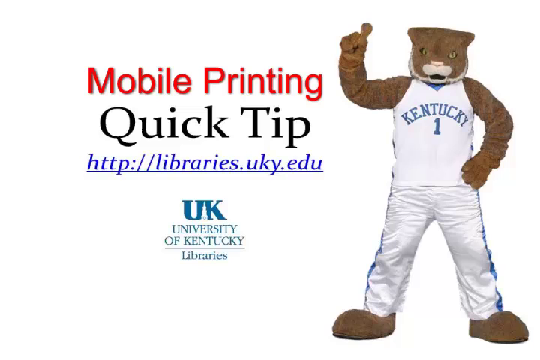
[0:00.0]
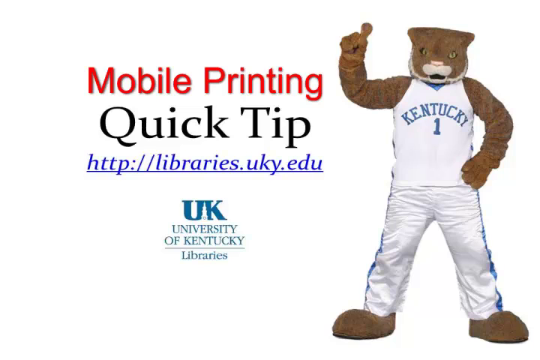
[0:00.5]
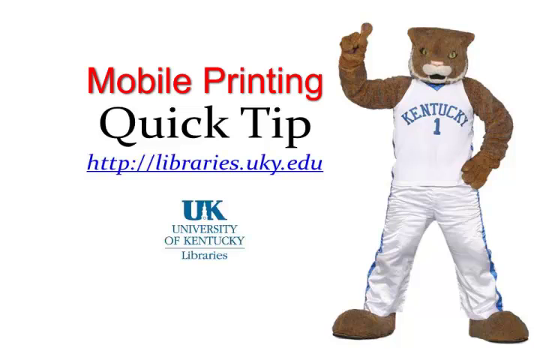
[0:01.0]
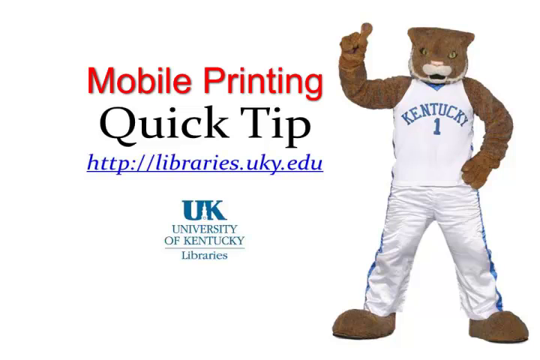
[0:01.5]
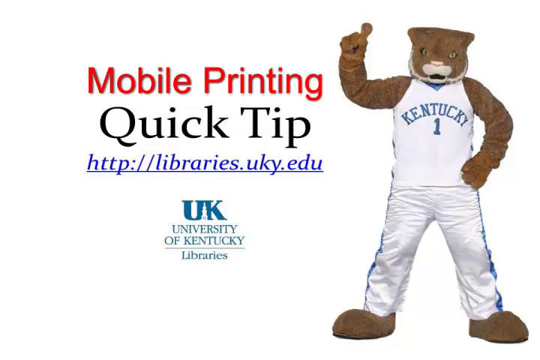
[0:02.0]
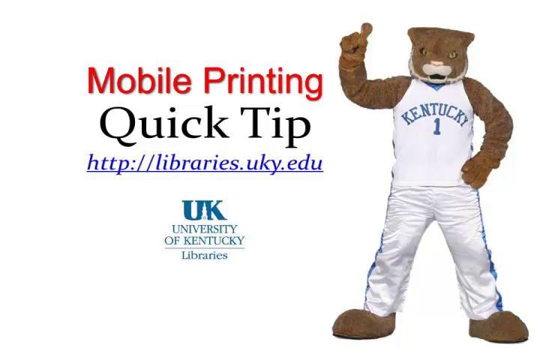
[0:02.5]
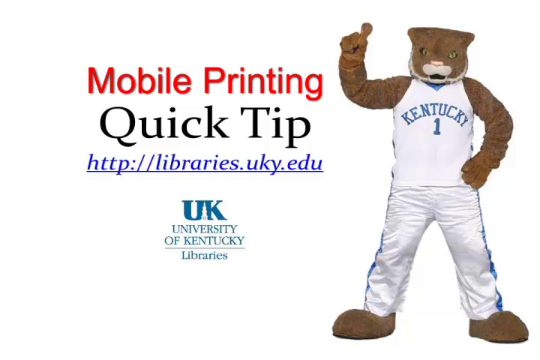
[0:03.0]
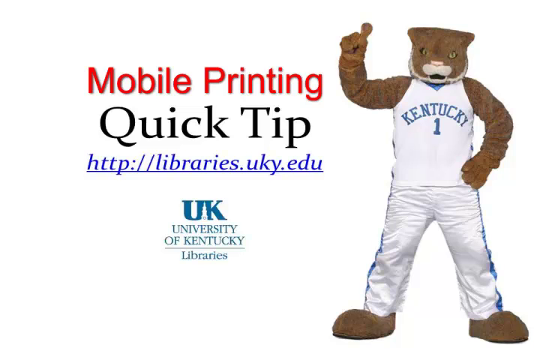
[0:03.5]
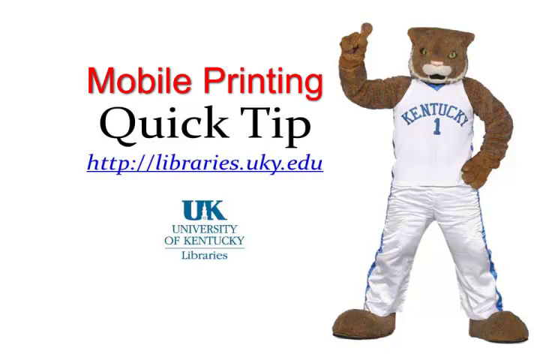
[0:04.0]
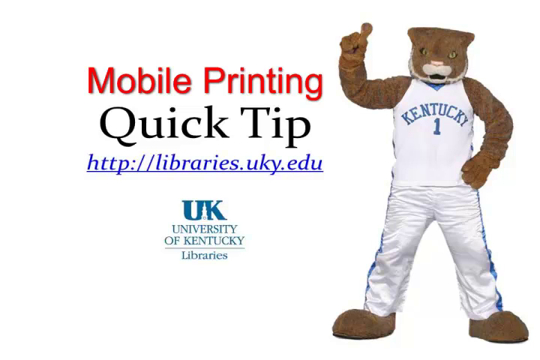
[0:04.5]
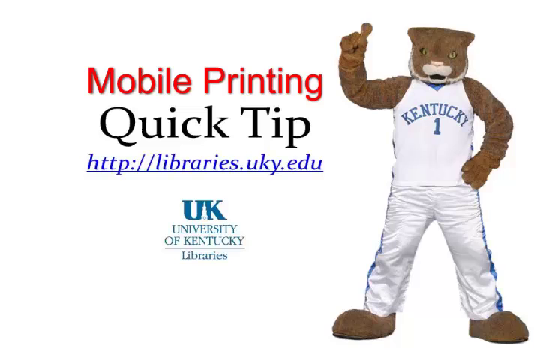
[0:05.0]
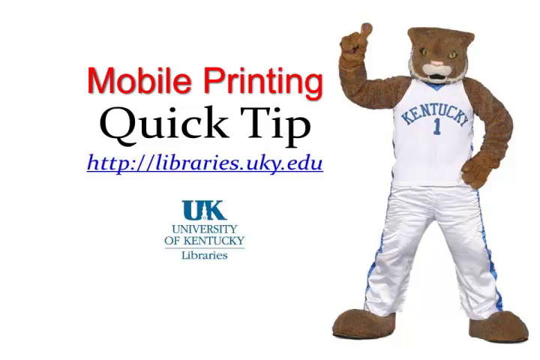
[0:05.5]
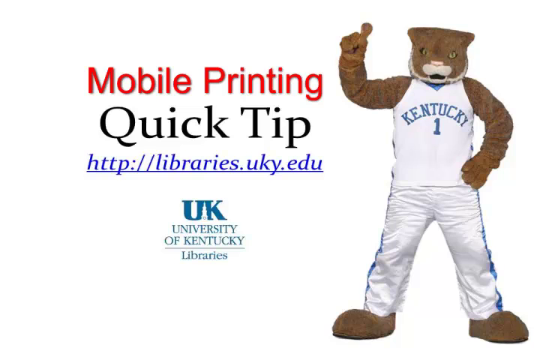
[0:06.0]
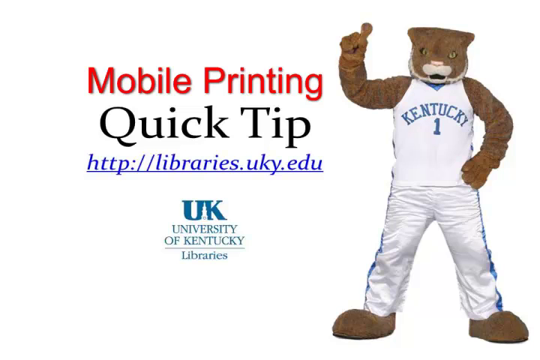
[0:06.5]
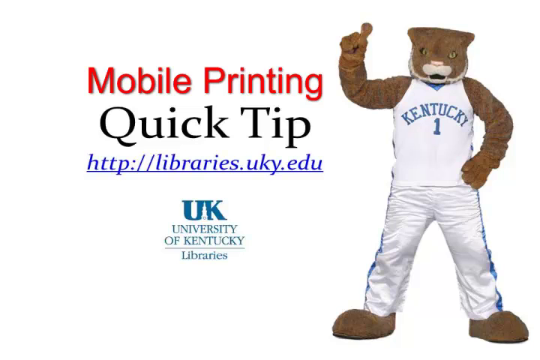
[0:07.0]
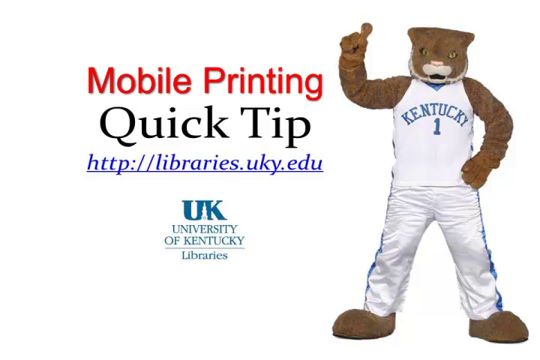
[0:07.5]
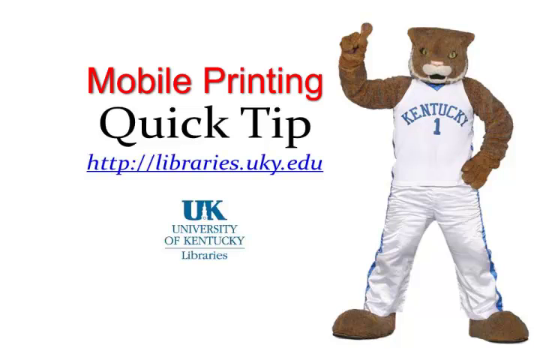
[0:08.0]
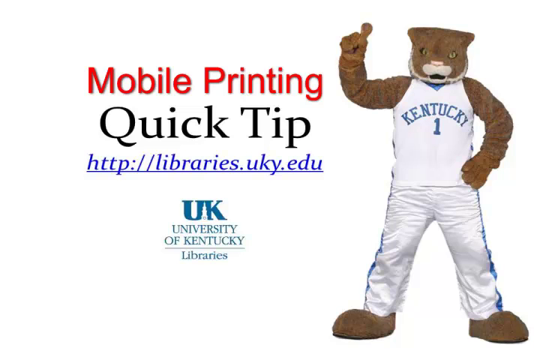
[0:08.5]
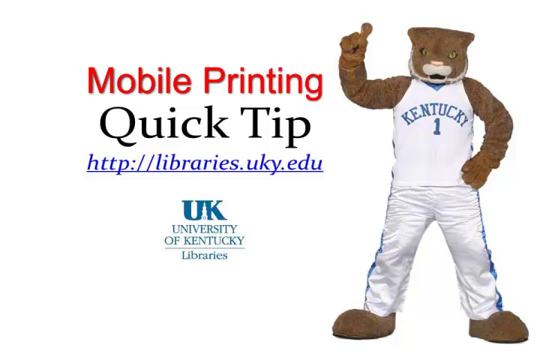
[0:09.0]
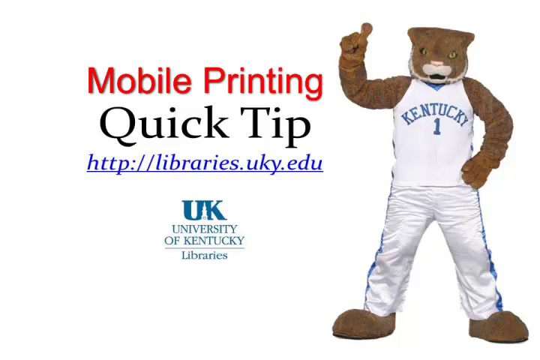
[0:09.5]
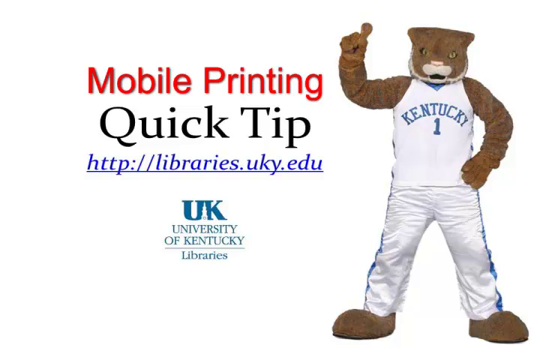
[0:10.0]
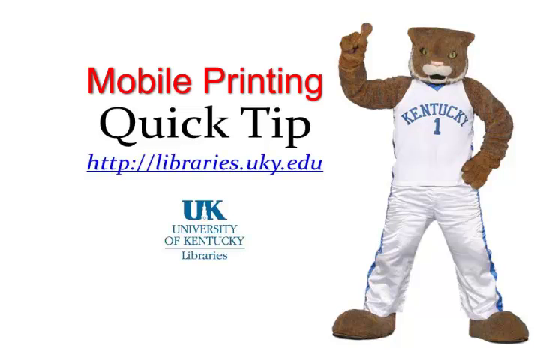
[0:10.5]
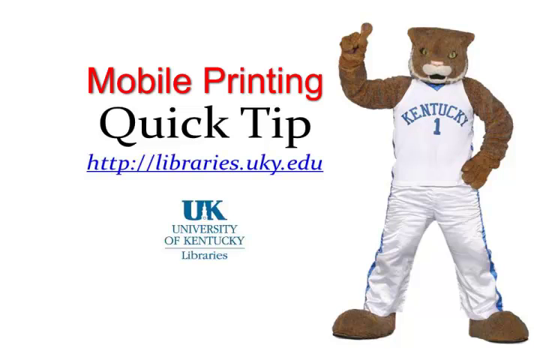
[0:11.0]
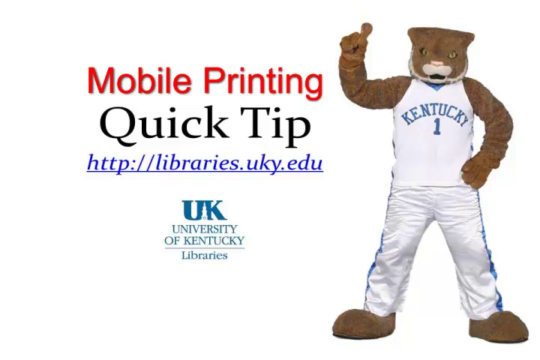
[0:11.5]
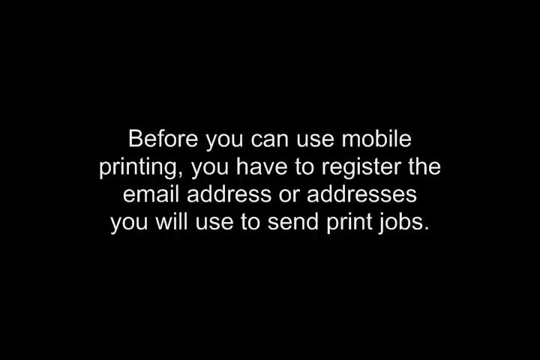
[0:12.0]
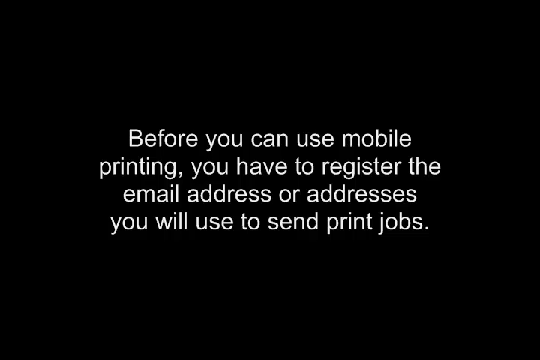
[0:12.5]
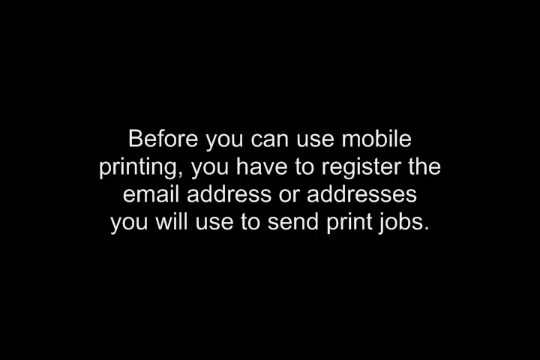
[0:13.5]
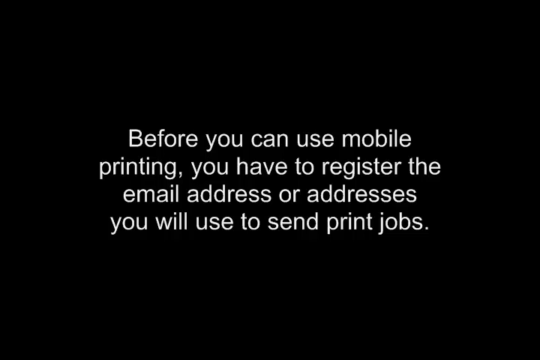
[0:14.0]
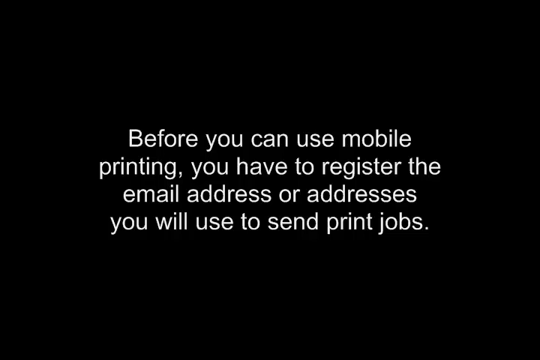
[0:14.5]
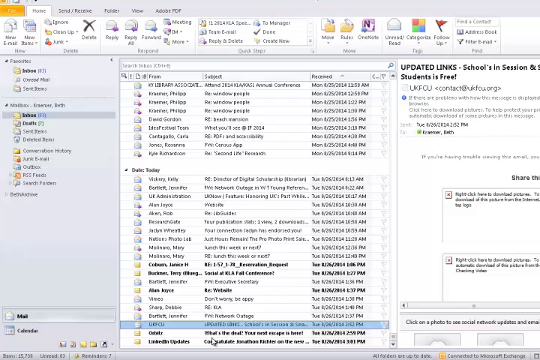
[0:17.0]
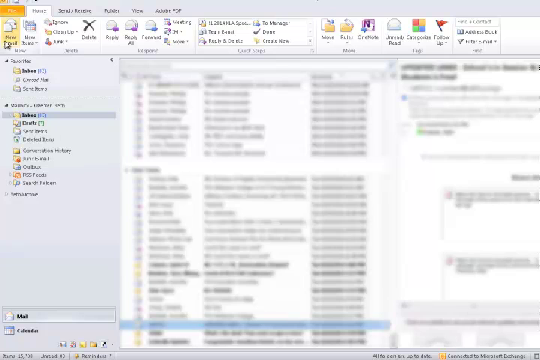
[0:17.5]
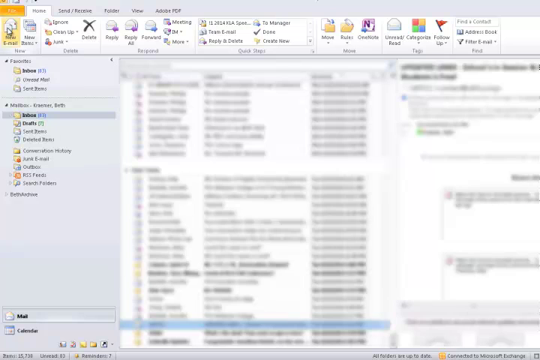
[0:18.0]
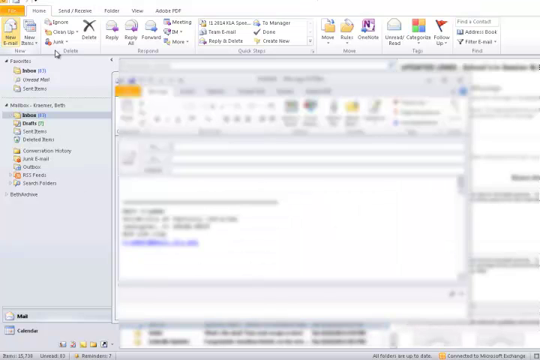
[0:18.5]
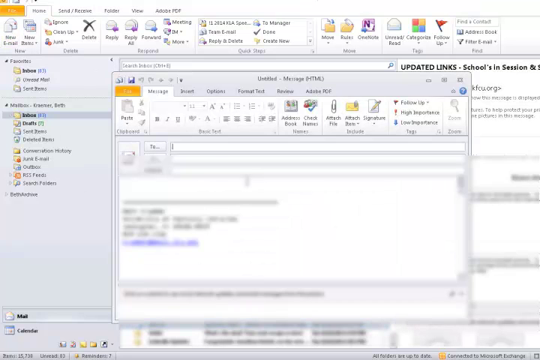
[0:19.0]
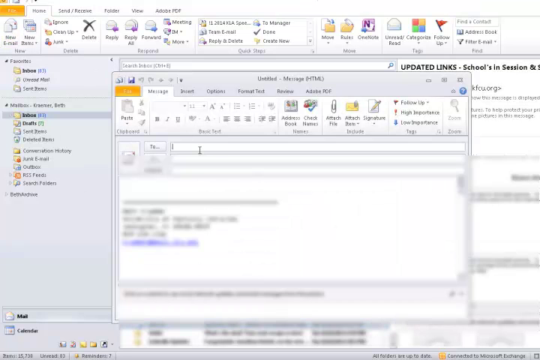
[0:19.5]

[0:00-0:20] The opening screen reads "mobile printing quick tip" with "HTTP://libraries.uky.edu" and, under it, "UK University of Kentucky libraries". A mascot that looks like a tiger or a lion appears, wearing a Kentucky one basketball shirt and what look like white track pants with blue stripes. Then white text on a black screen reads "before you can use mobile printing you have to register the email address or addresses you will use to send print jobs". The video then moves to a rather old-fashioned-looking website where someone is writing an email; part of it is blurred out, and the person is apparently about to type in the address.